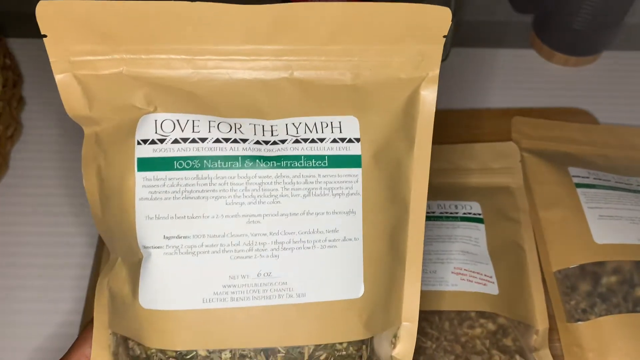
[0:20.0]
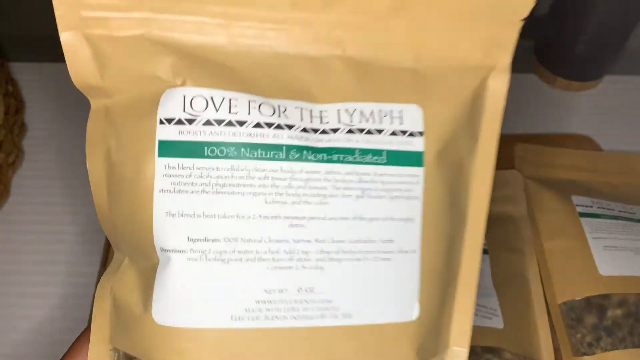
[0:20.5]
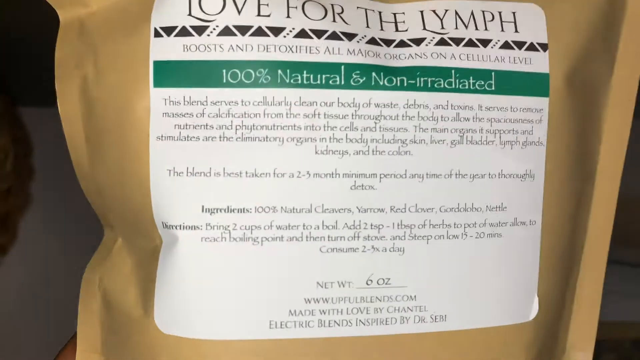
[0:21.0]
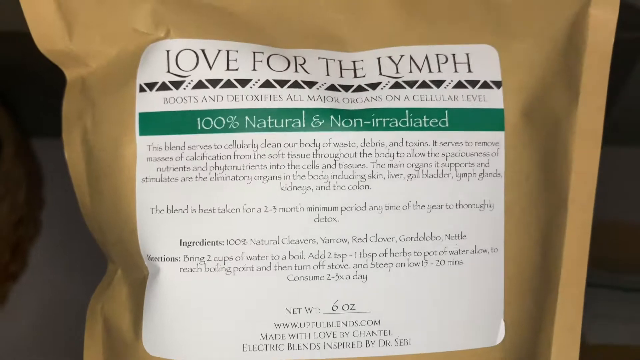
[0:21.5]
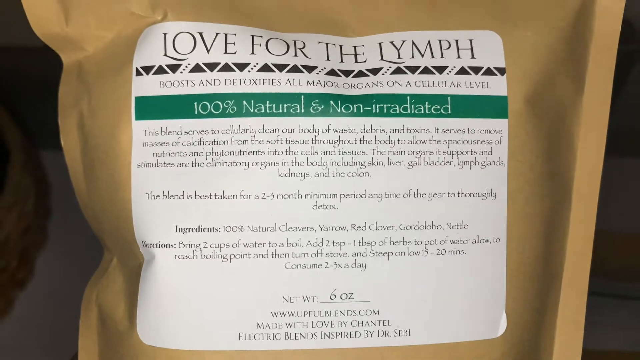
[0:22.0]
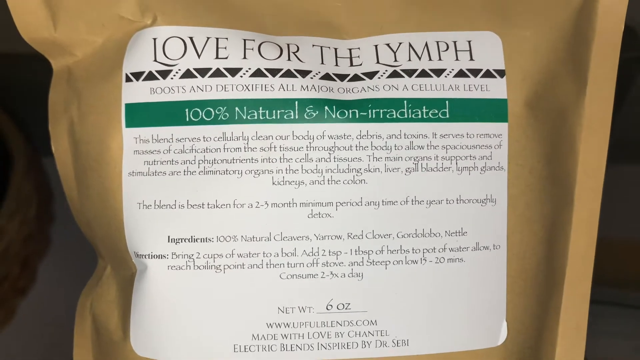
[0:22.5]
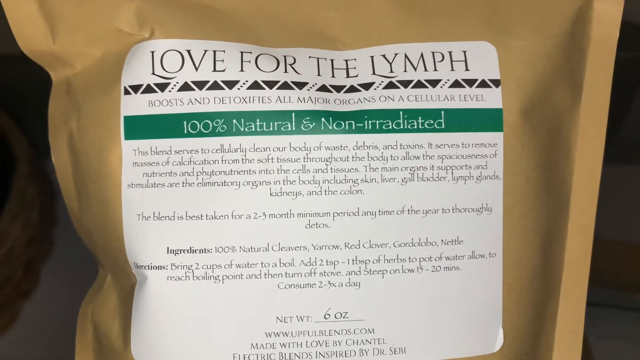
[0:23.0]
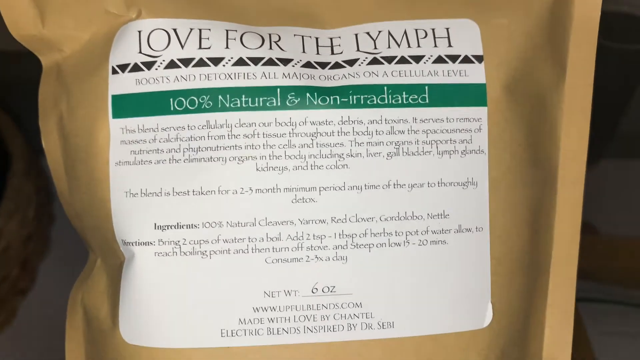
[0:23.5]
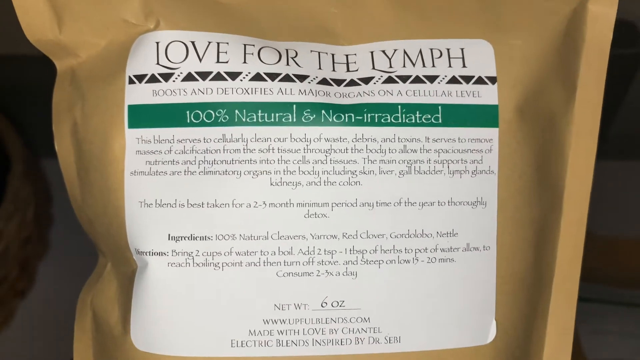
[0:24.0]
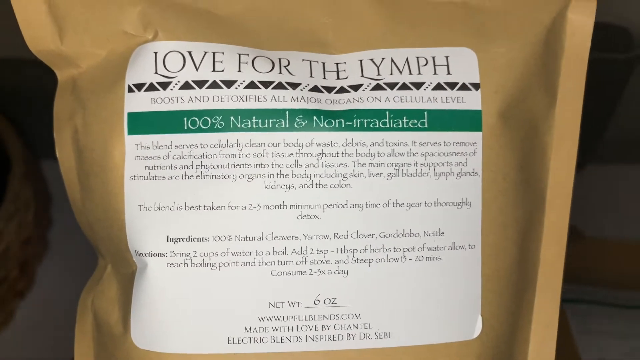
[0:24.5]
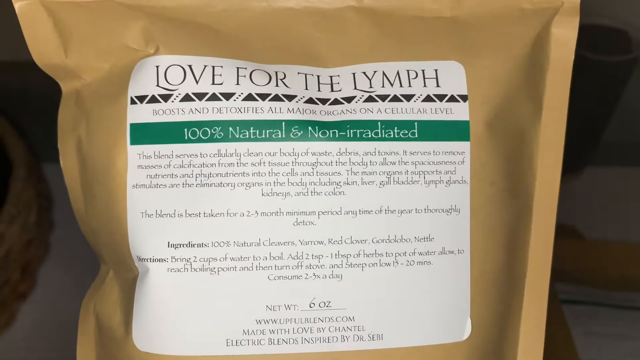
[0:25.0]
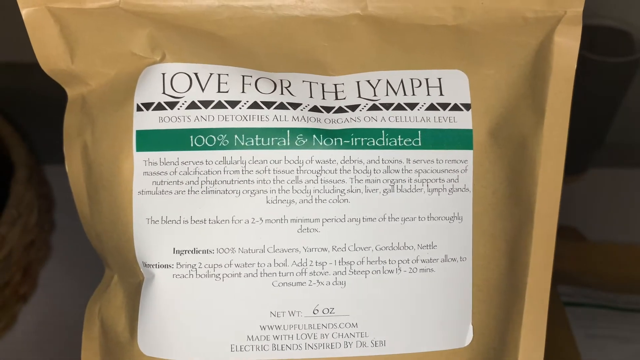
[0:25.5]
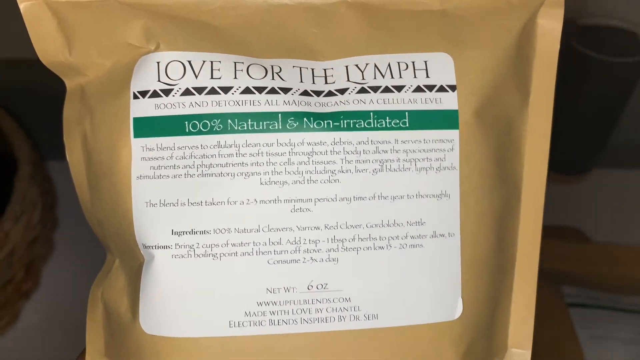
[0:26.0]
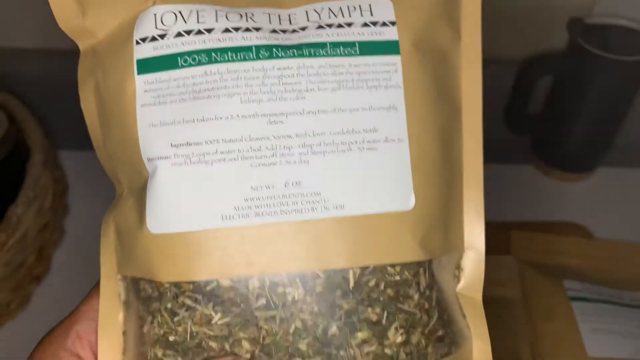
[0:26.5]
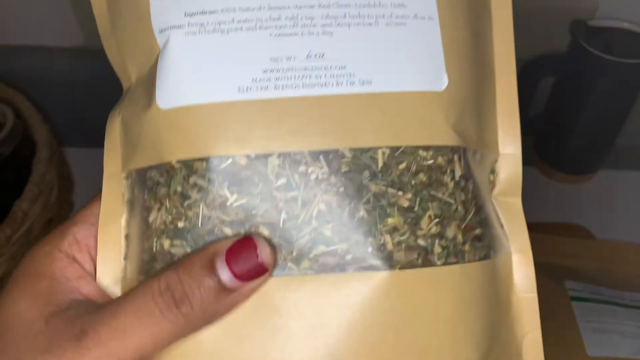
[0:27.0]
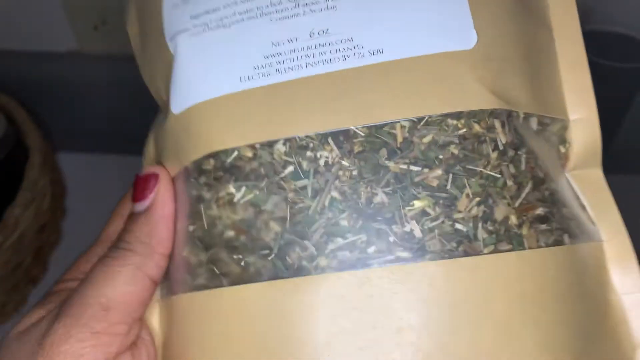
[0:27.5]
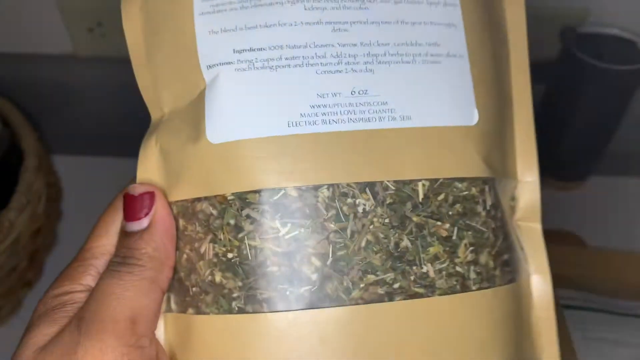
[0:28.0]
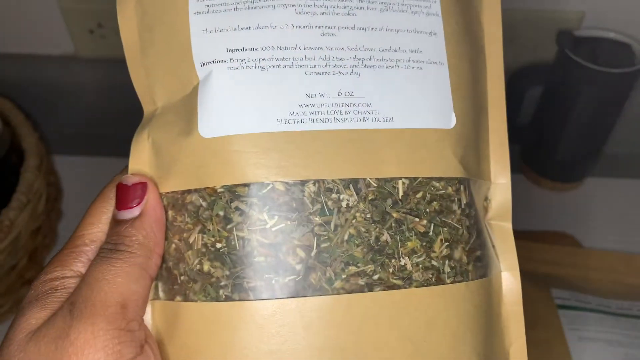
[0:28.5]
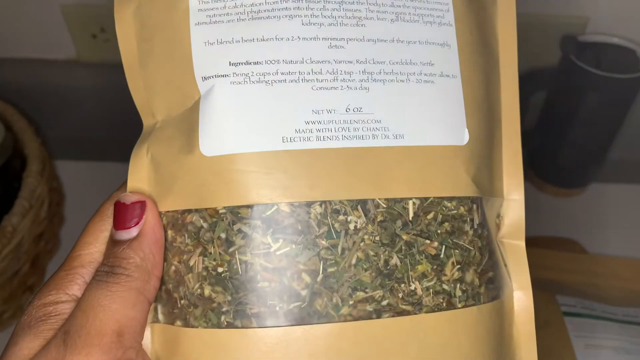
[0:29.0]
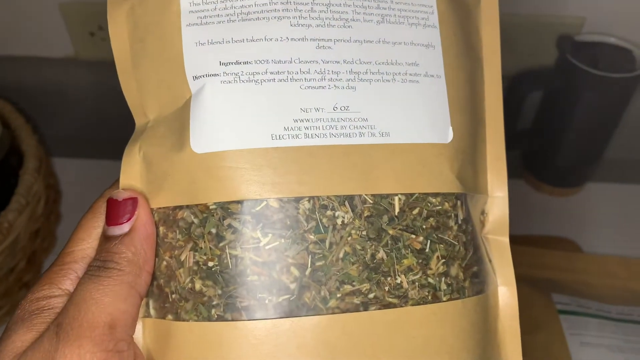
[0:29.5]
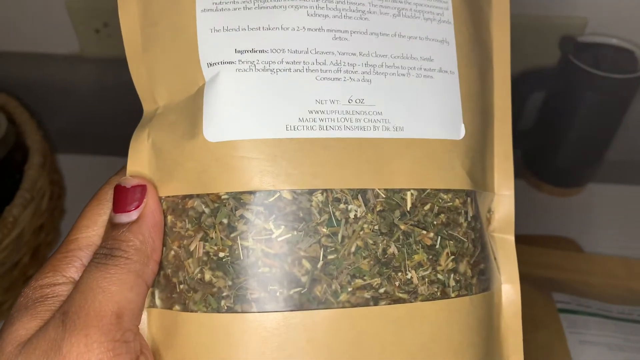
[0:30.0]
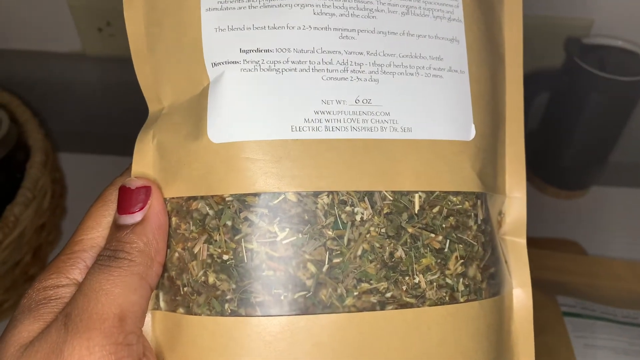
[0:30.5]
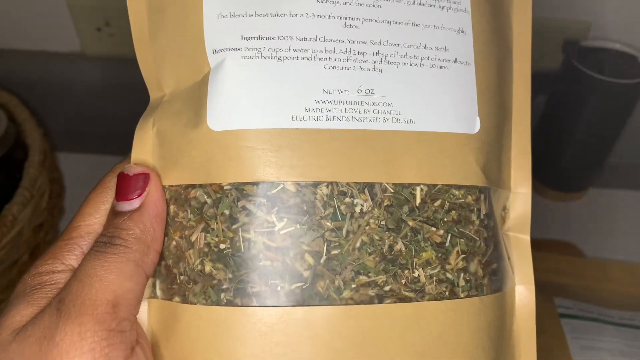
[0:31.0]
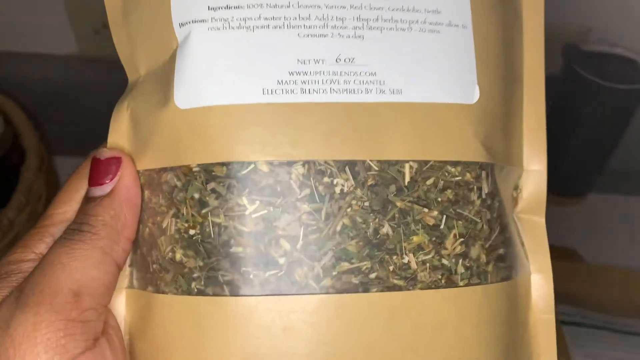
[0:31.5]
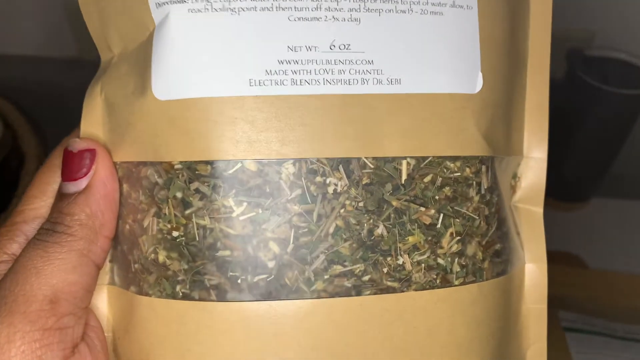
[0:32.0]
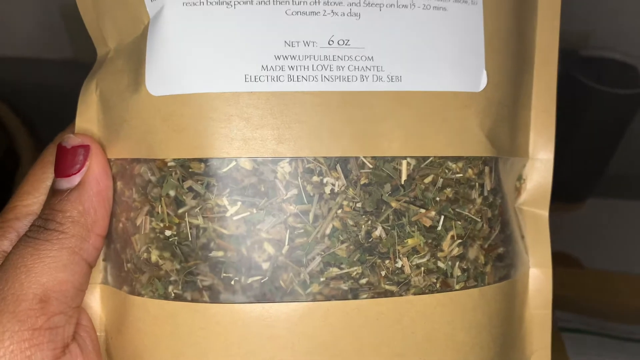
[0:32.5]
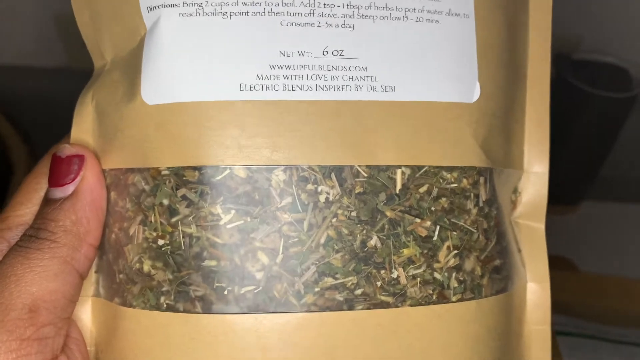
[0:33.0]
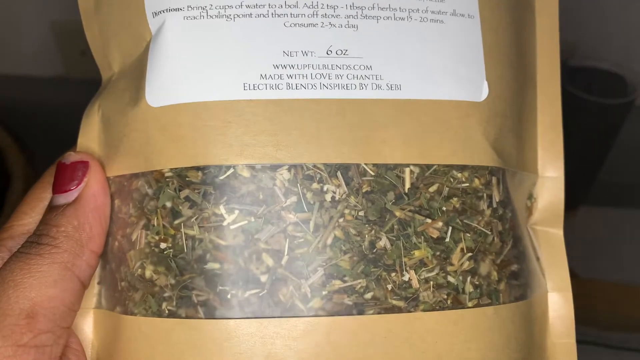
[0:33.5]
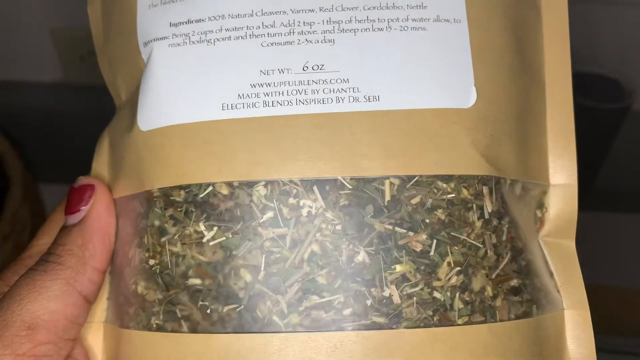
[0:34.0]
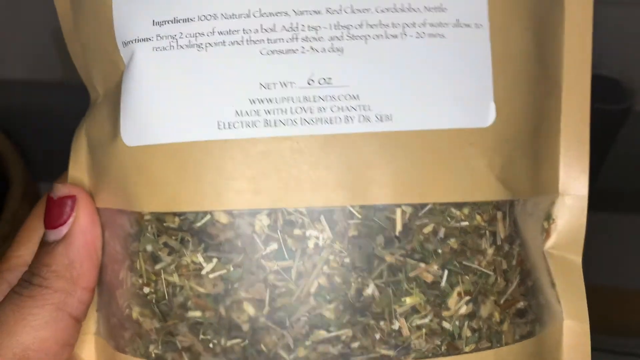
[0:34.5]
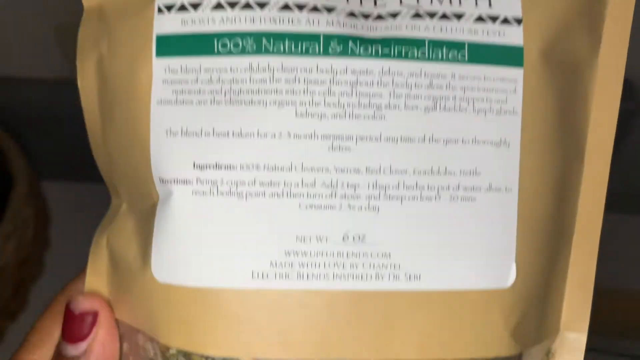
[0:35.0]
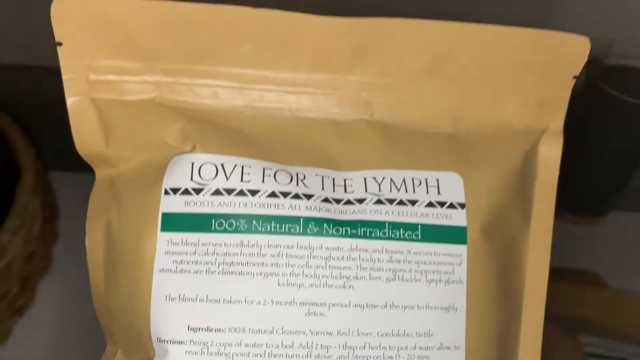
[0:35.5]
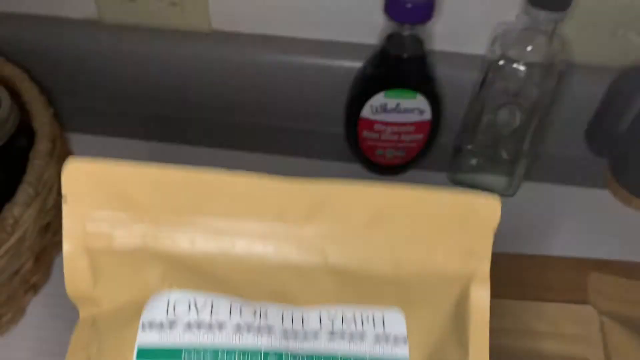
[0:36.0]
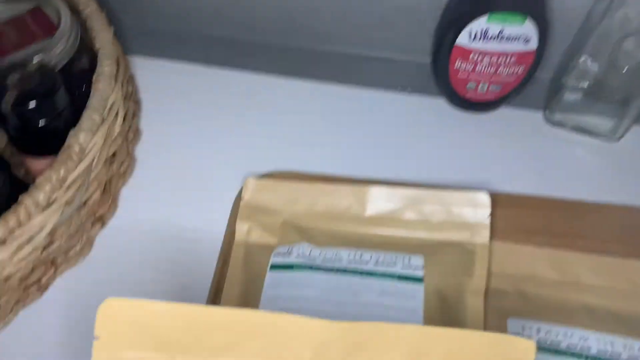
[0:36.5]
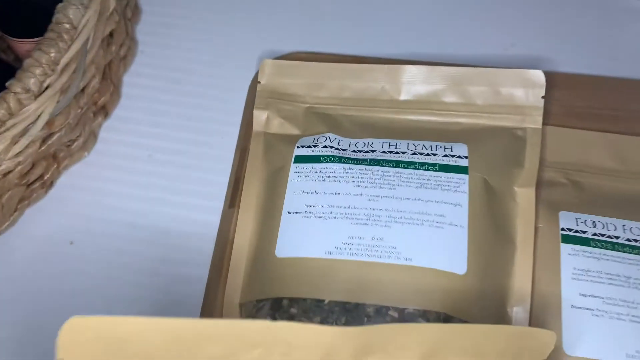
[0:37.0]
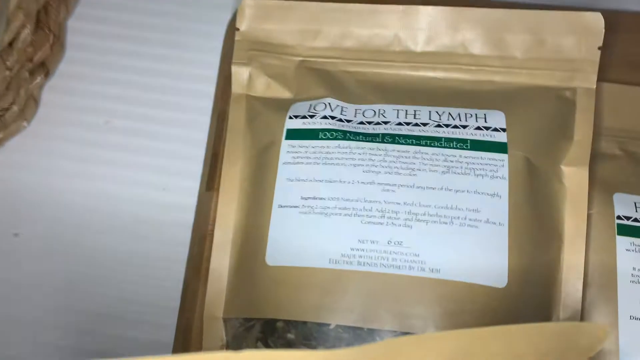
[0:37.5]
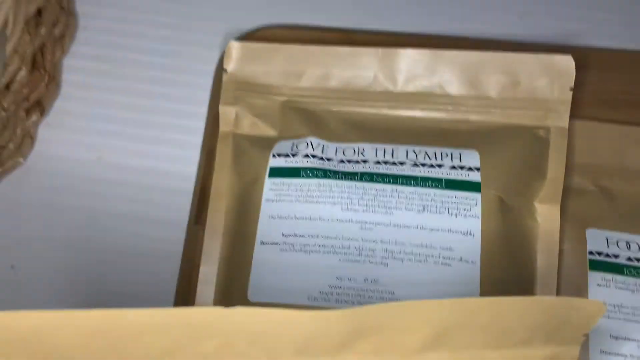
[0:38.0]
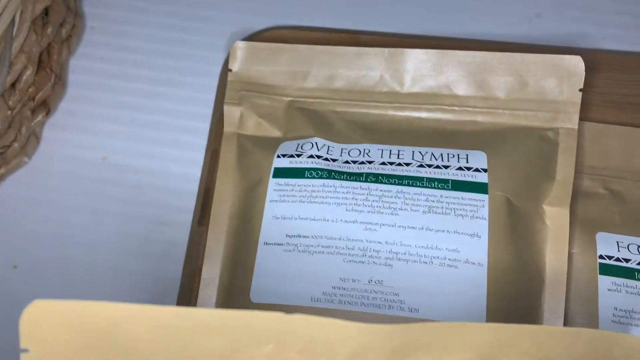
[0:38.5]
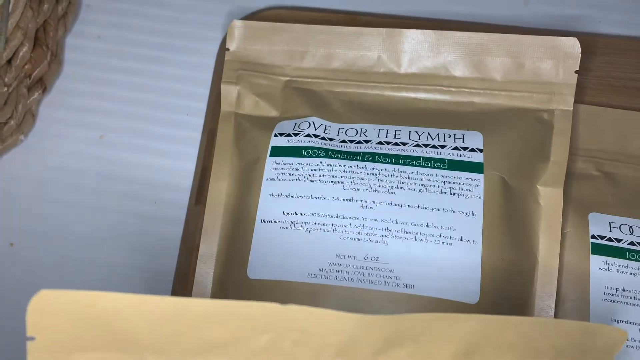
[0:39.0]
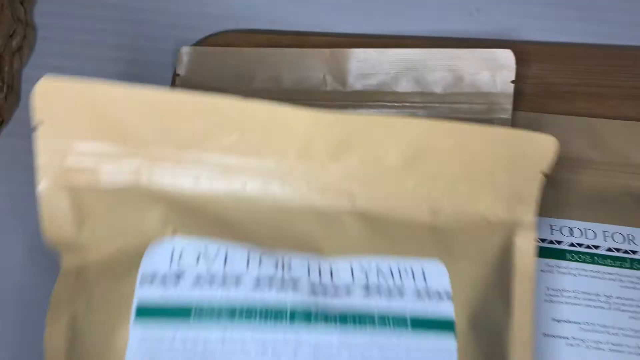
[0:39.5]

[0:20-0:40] A close-up shows a packet that seems to contain vegetables or herbs, with the words "love for lymph" and "100% natural and non-toxic." The contents look dried. A person's hands are visible, but not the face, holding one of the packets and showing what is written on it. The bag looks like a 1kg bag in khaki paper with a white label, and whatever is inside, herbs or vegetables, looks greenish but dry. The woman shows it to the camera. About four to five bags are visible. Nothing changes except when the woman lifts the bag up and puts it down, and the setting stays the same. The writing on the bag cannot be read, but it relates to the contents of the package.